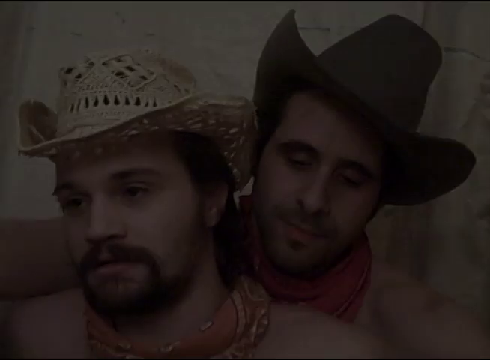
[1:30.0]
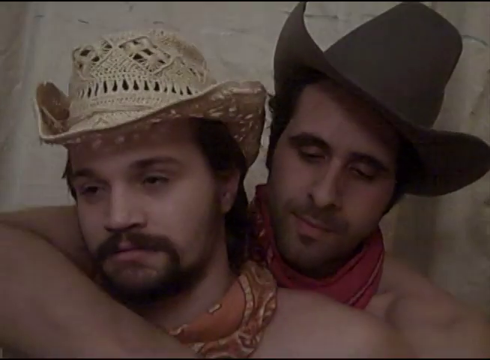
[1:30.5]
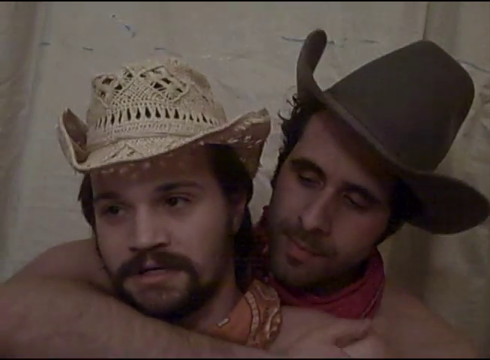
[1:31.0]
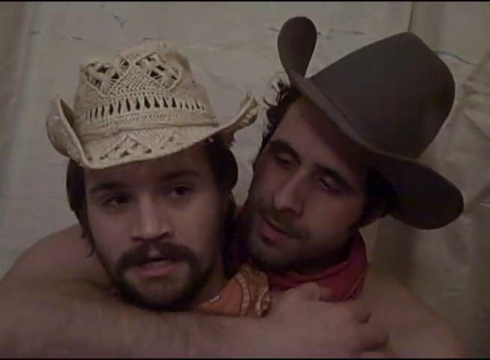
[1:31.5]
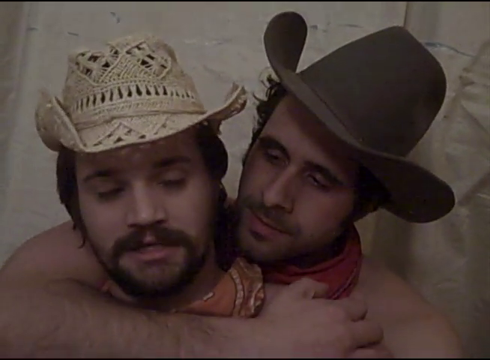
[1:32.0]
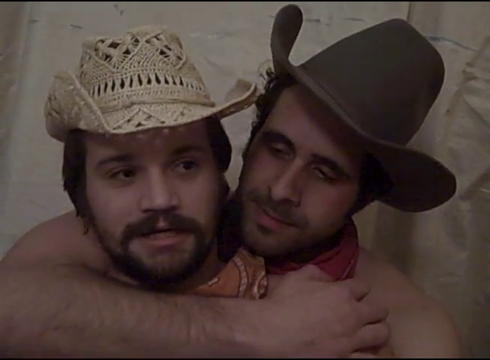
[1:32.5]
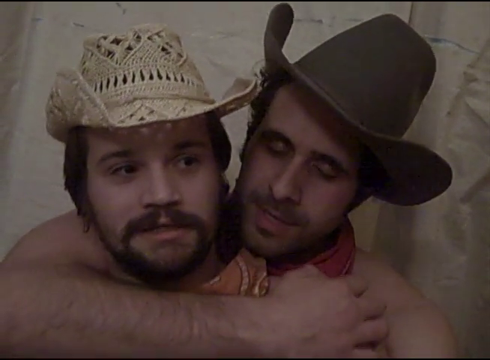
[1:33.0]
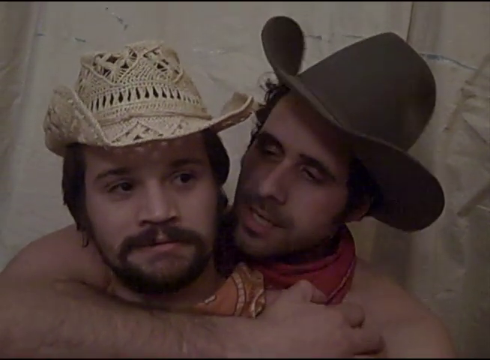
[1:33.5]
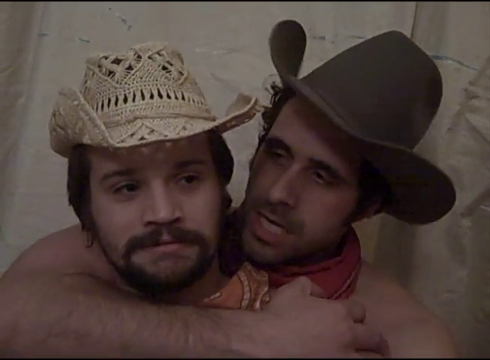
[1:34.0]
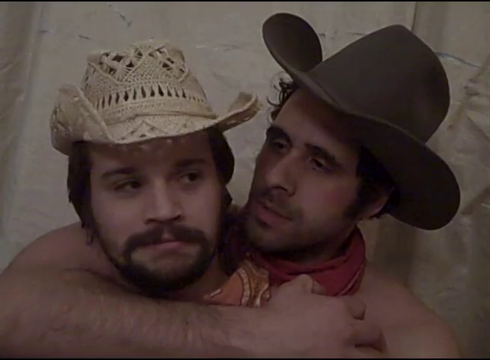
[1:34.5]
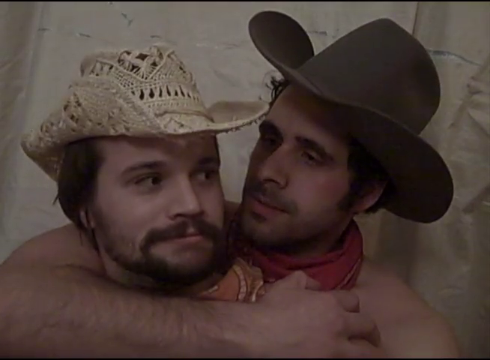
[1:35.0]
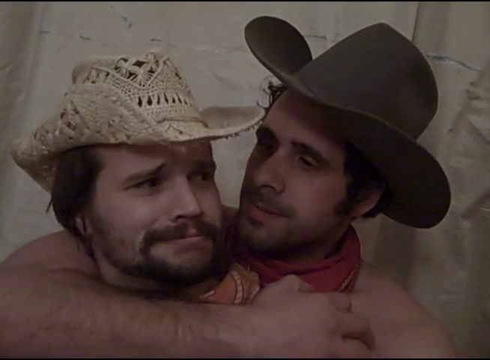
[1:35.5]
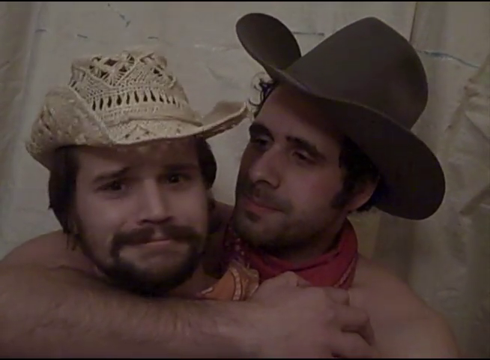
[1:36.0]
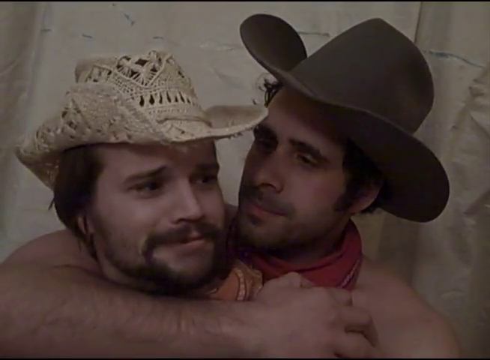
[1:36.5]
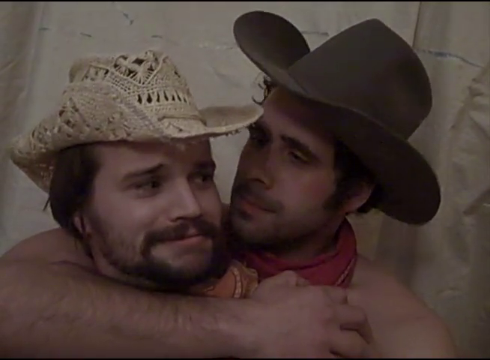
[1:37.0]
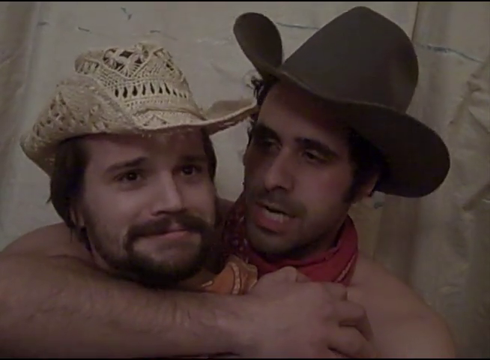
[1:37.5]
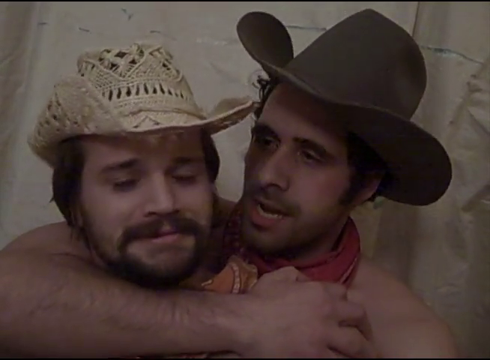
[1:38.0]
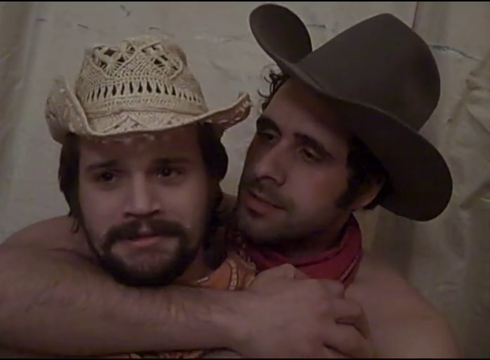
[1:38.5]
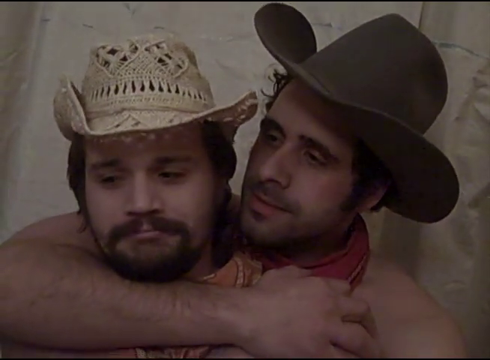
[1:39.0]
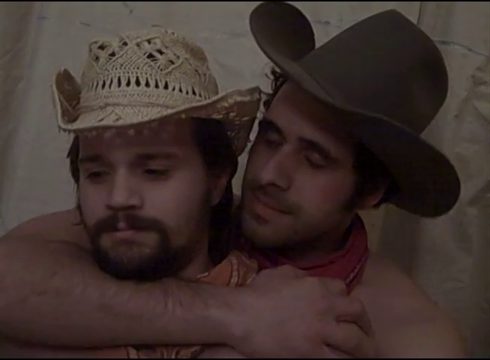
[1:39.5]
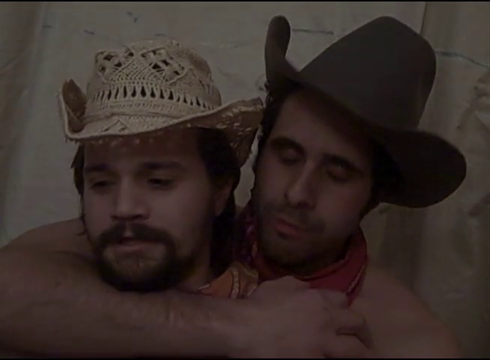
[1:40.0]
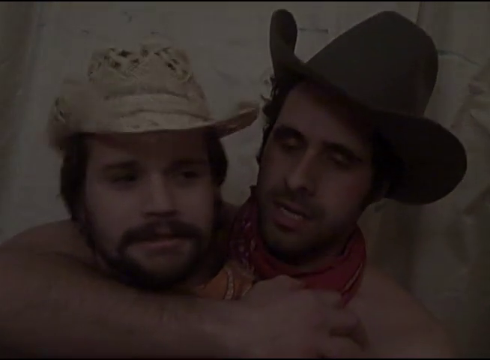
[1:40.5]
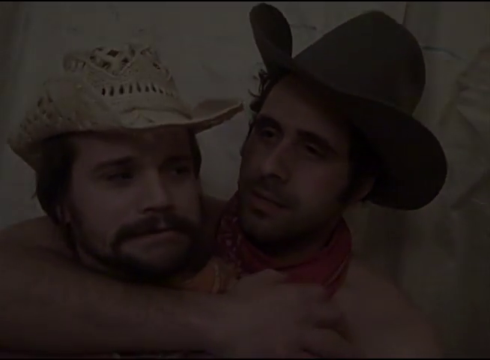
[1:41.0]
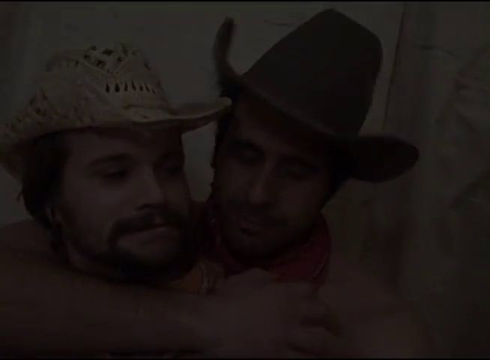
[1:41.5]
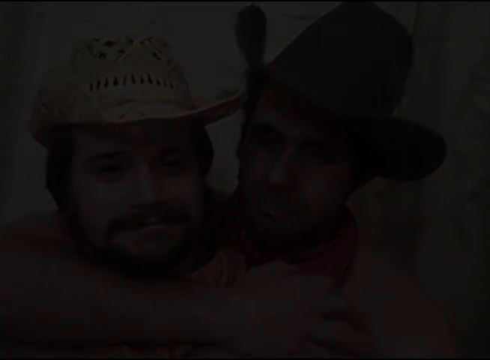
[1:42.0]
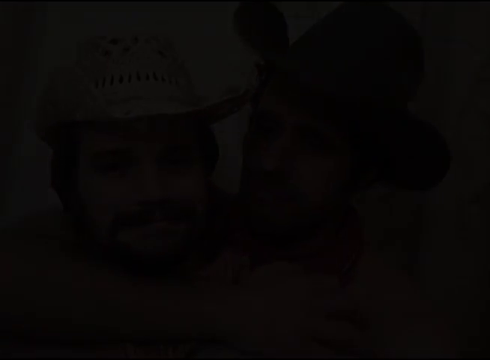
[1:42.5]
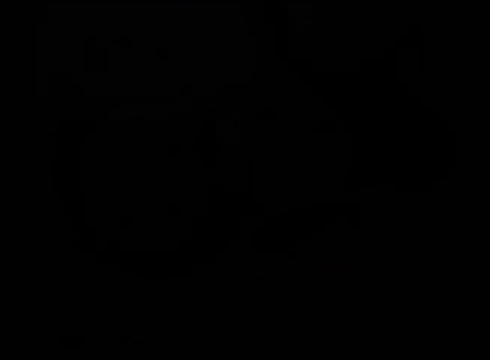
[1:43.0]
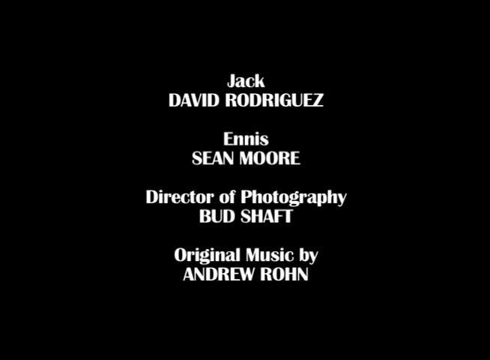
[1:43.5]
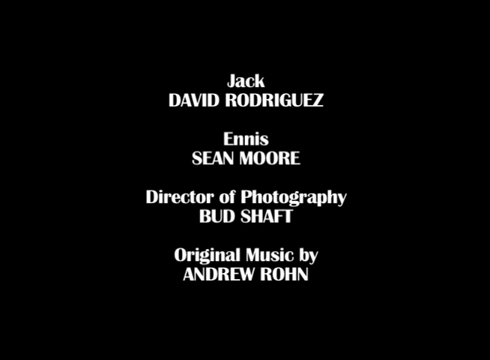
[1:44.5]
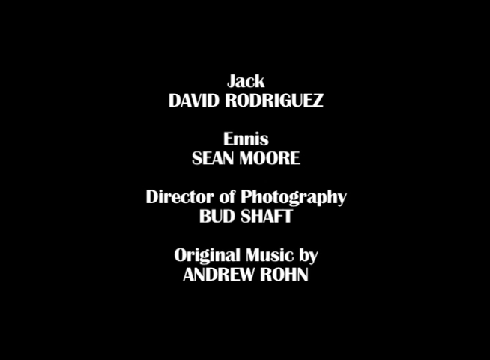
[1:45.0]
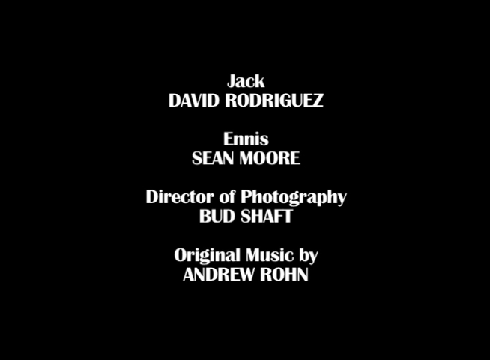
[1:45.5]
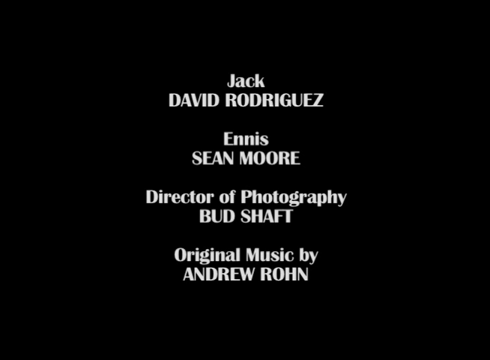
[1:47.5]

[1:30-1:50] In the aftermath of the parody scene, the two Caucasian men, seen from the chest up, are now in a loving embrace: the one on the left wears a white macrame cowboy hat and the one on the right a black cowboy hat. The man on the right has his hand hooked around the man on the left, somewhat around his neck. The man on the left has a beard, a mustache and brown eyes; the man on the right has a dark brown beard, a mustache, dark curly hair and a dark cowboy hat. In a humorous moment, the man on the left sort of grins and looks to his right, and the scene goes black. On a black background, credits are listed from top to bottom in bold white text: Jack played by David Rodriguez, Ennis played by Sean Moore, director of photography Bud Schaaf, and original music by Andrew Rohn.